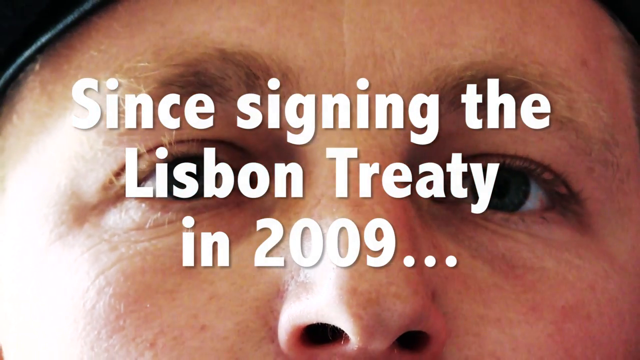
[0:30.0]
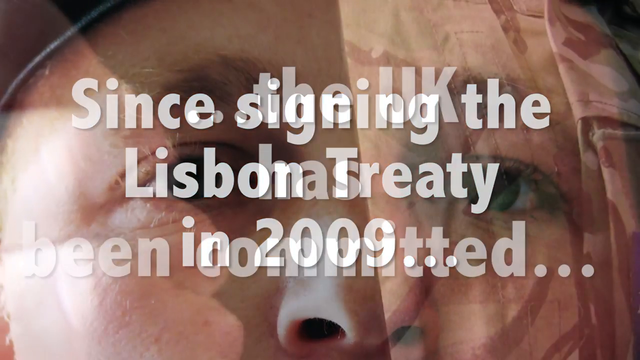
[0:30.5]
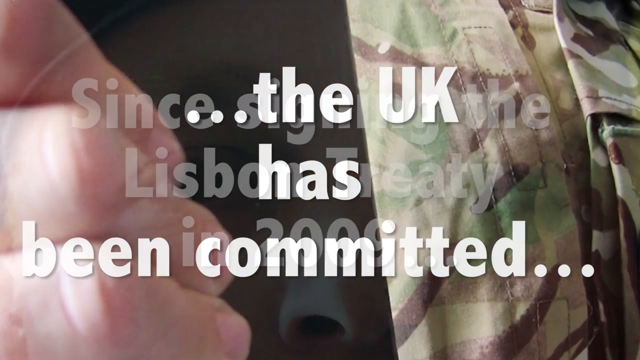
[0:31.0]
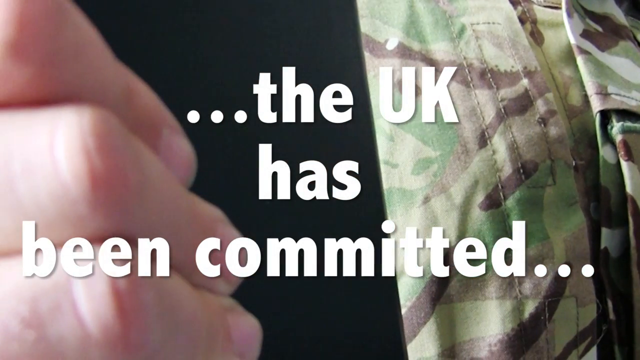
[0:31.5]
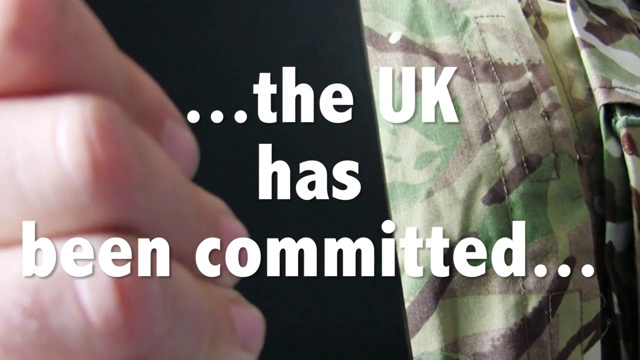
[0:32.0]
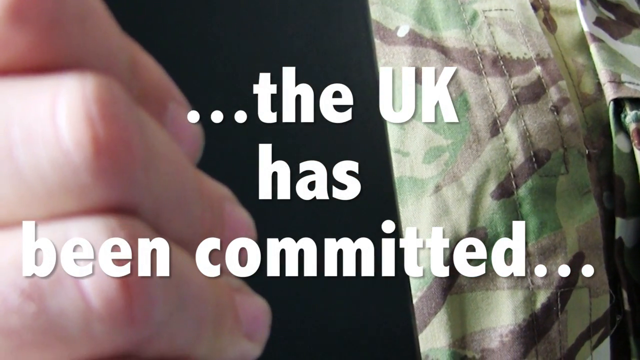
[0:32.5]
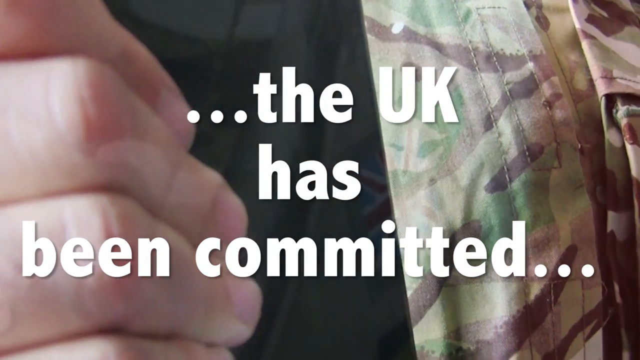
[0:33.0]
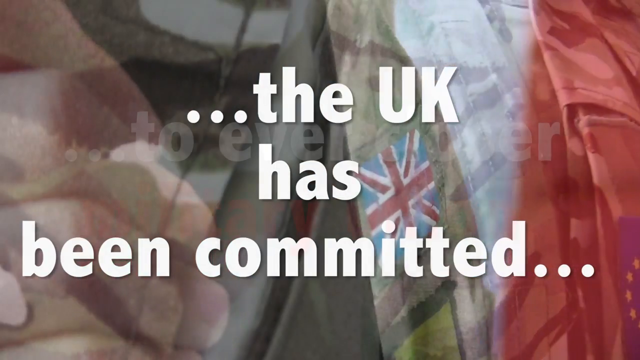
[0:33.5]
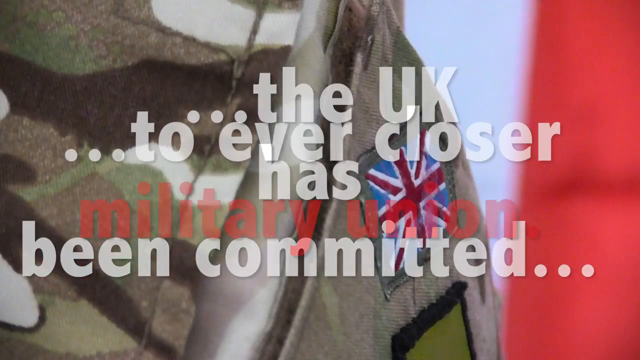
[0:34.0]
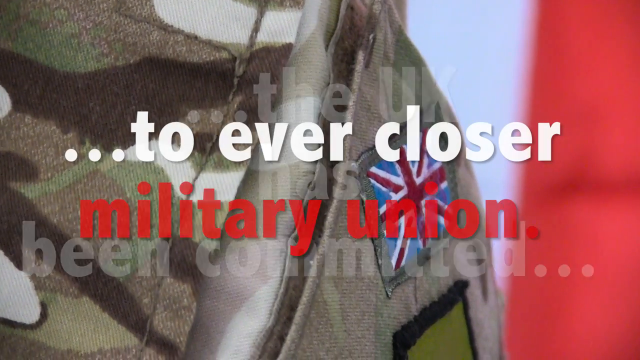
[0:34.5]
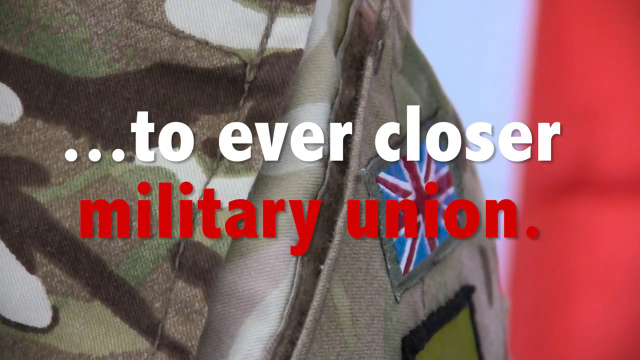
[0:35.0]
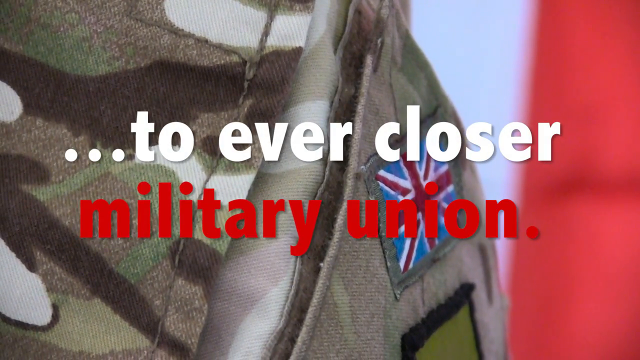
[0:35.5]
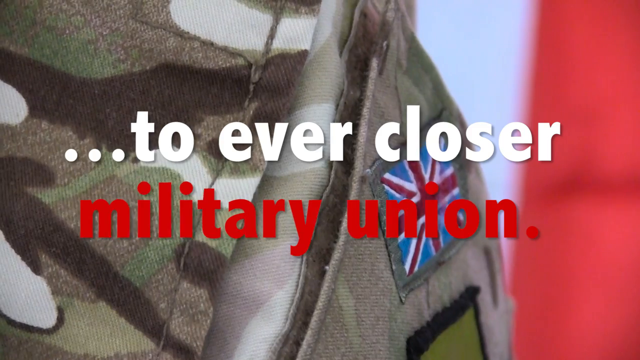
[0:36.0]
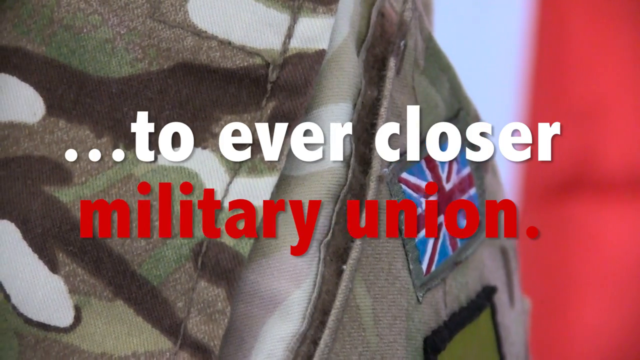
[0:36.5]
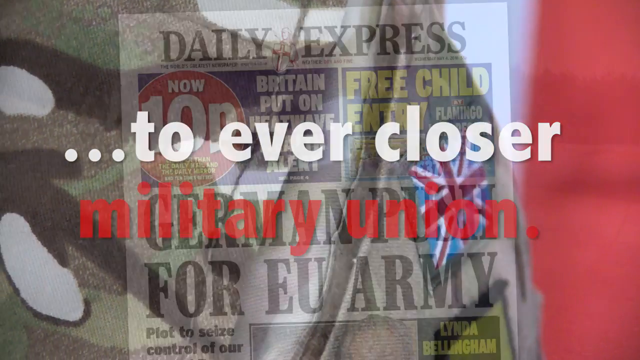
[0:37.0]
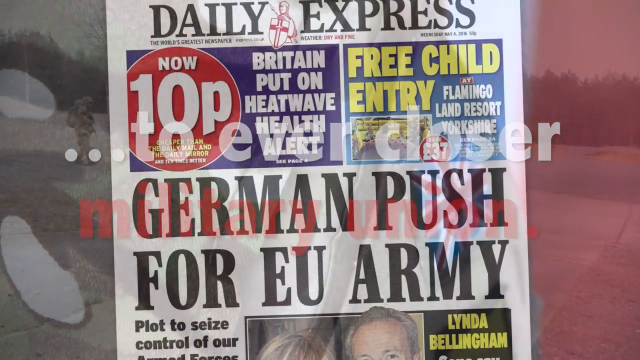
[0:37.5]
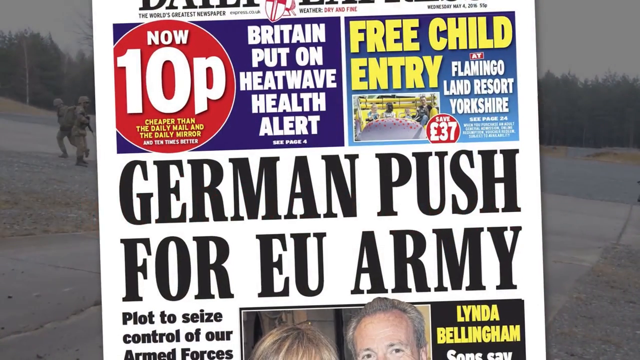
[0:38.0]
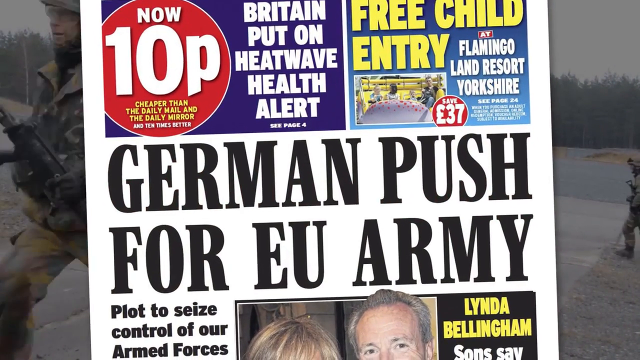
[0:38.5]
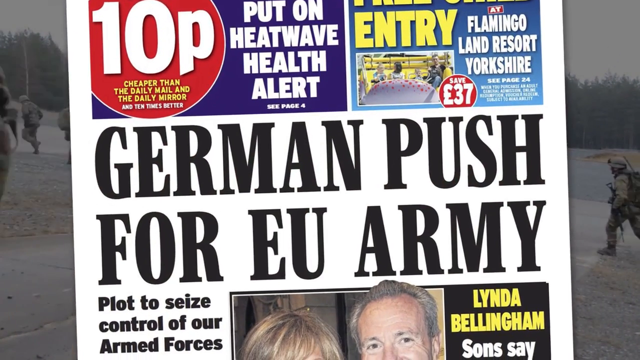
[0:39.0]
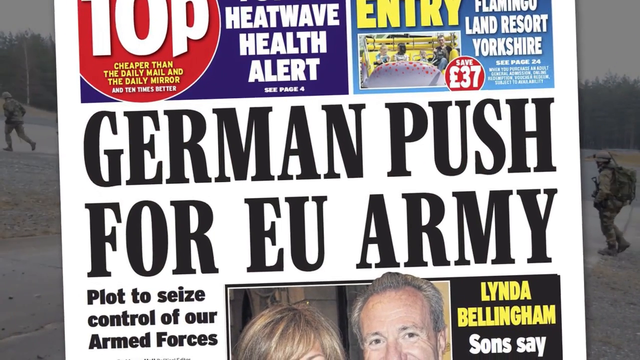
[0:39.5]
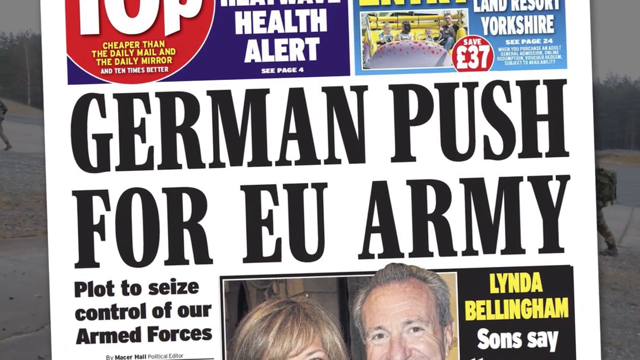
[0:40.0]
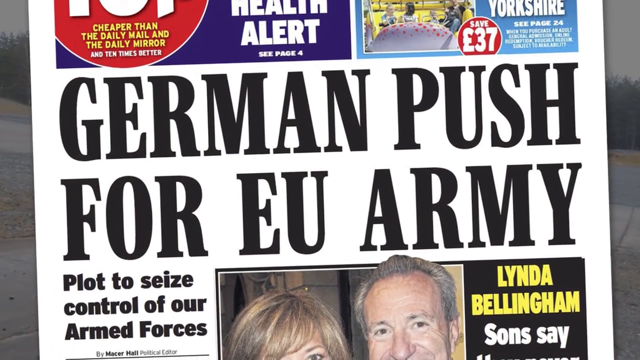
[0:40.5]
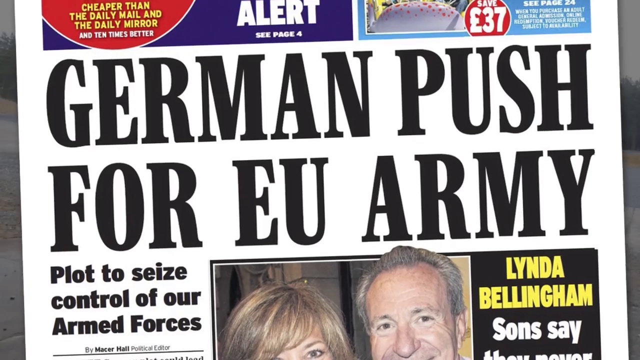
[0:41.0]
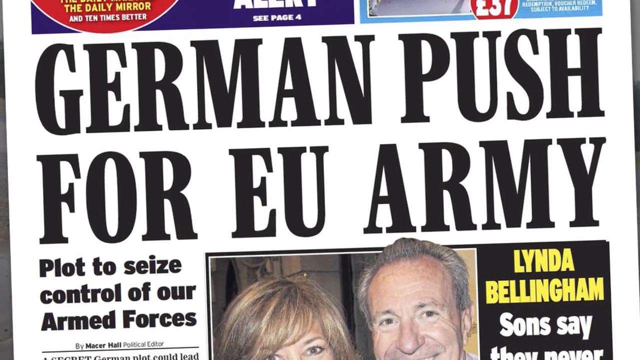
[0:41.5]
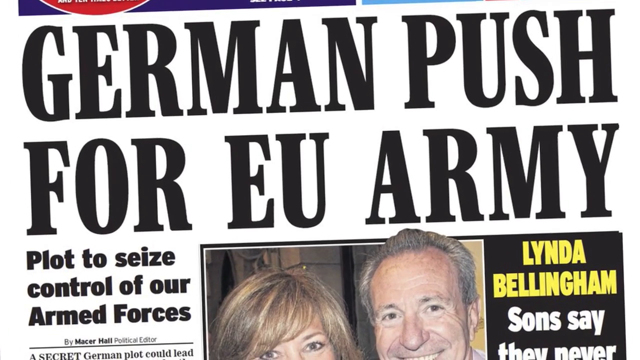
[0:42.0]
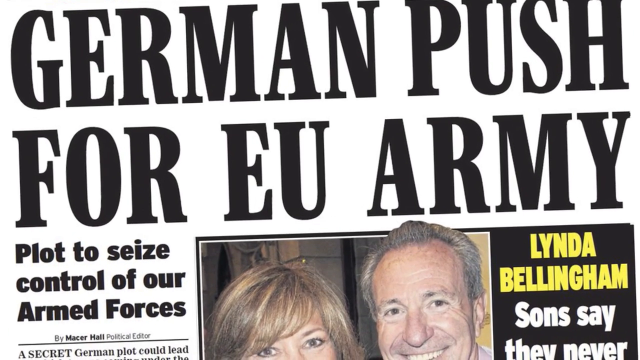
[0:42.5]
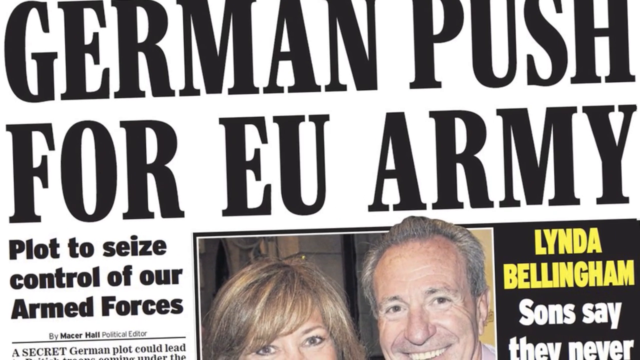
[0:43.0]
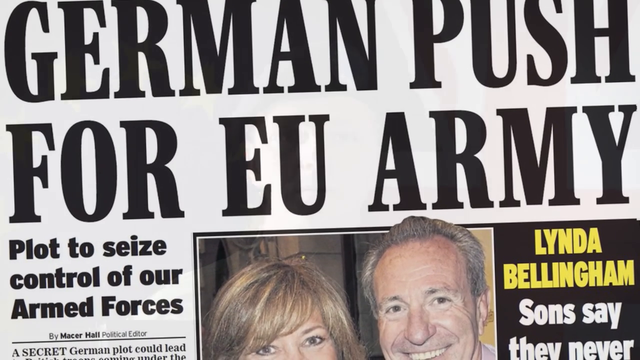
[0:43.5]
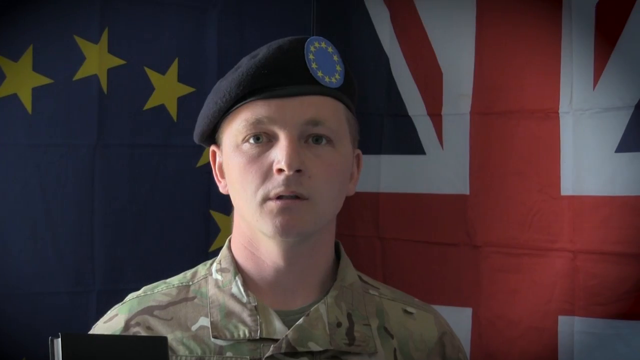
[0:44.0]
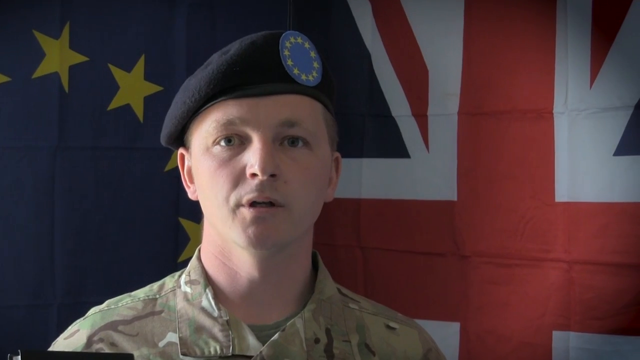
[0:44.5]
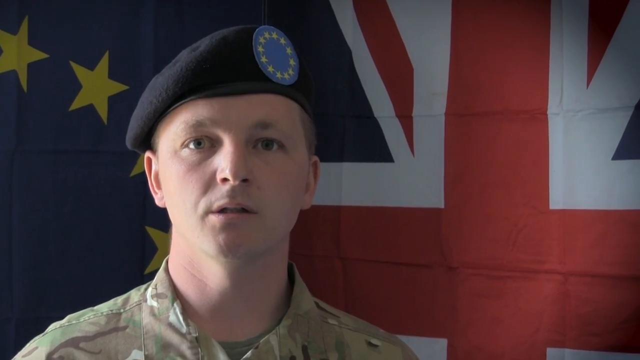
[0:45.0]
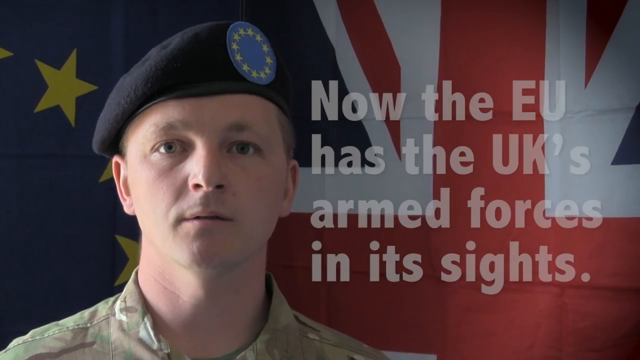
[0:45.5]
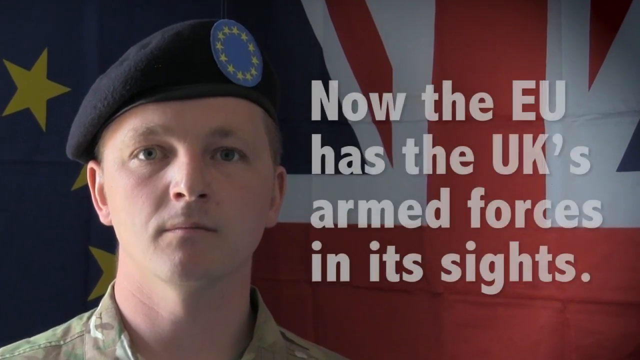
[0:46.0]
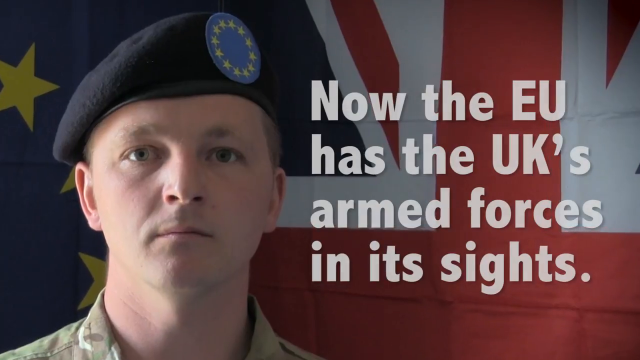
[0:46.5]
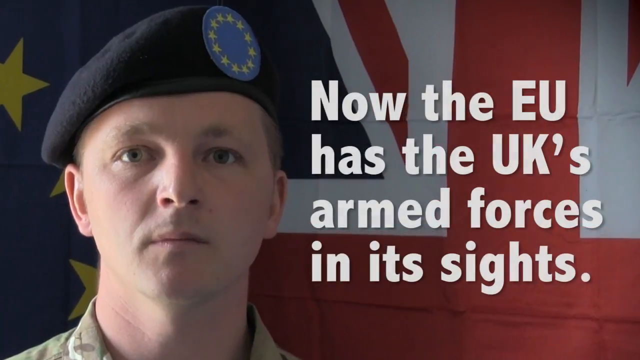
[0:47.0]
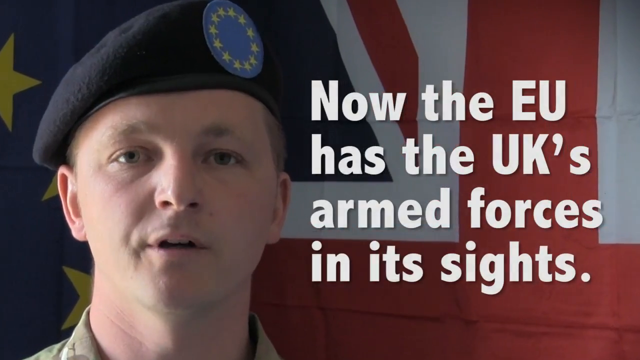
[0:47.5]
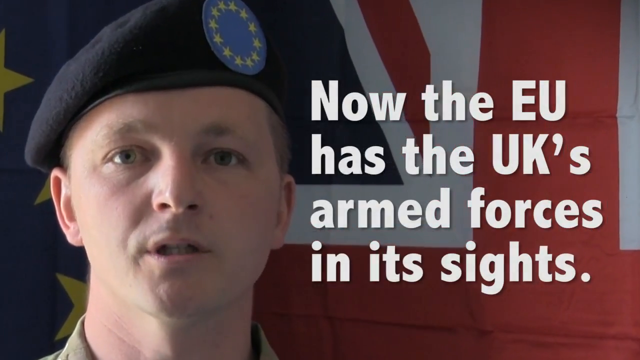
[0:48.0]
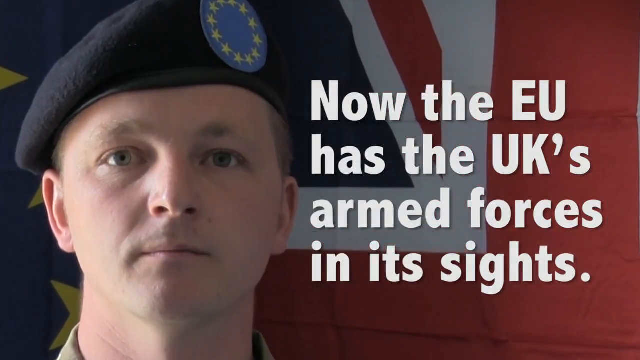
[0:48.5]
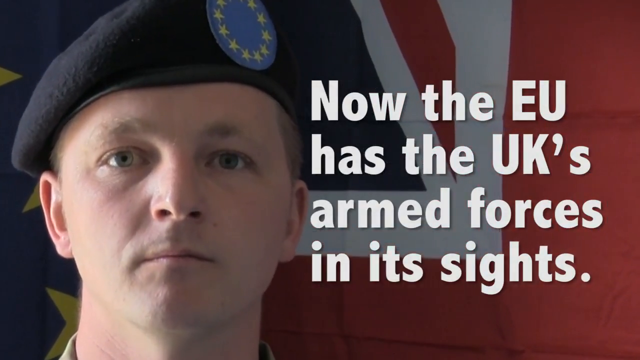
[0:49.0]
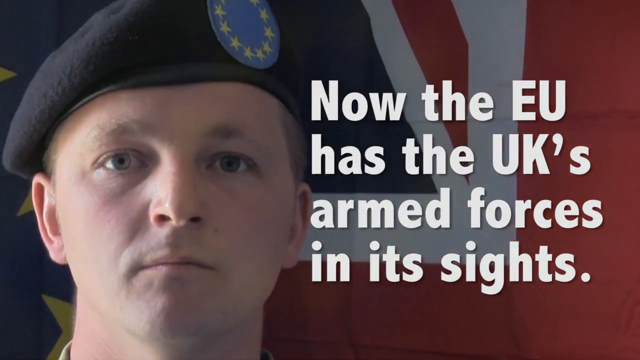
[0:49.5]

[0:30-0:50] A close-up shot shows a man's face; he has white skin, blue eyes and blonde eyebrows and eyelashes, and appears to be wearing a hat. The words on the screen read "since signing the Lisbon Treaty in 2009..." and "UK has been committed...". Next, a white hand grips a black object, with a camouflage uniform visible. The words "to ever closer military union" come onto the screen, with the camouflage outfit in the back. A photo of a newspaper follows, with "German push for EU army" on its front and "Plot to seize control of our armed forces" also on it. Then a young soldier wearing a hat and a camouflage shirt speaks to the camera, and the words "now the EU has the UK's armed forces in its sights" appear against a background showing the UK flag.